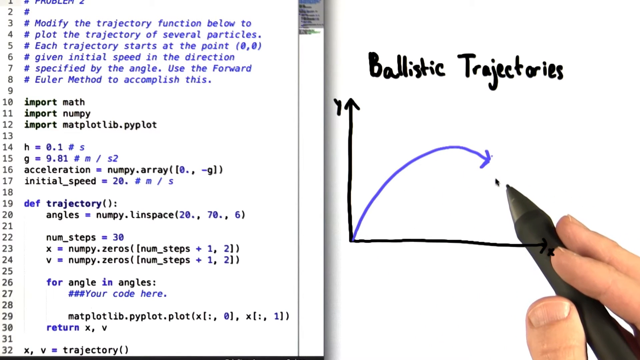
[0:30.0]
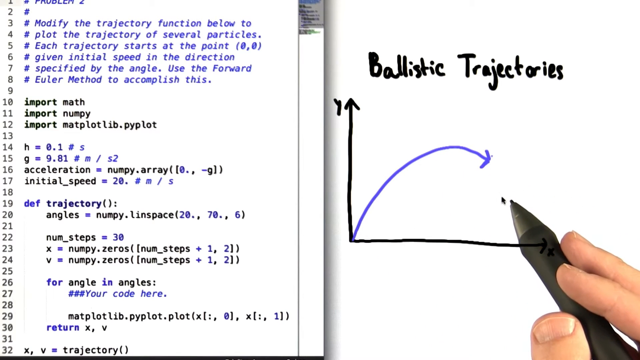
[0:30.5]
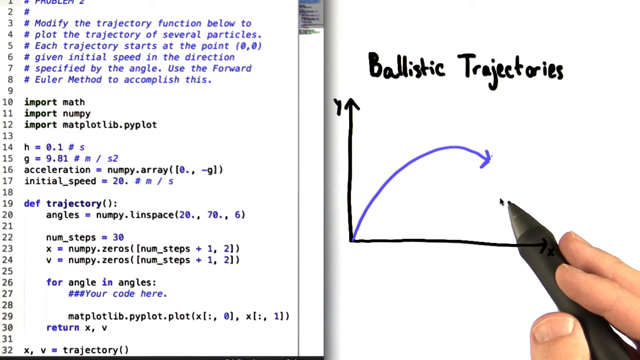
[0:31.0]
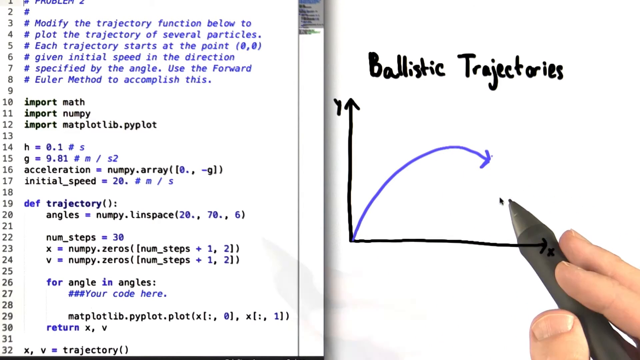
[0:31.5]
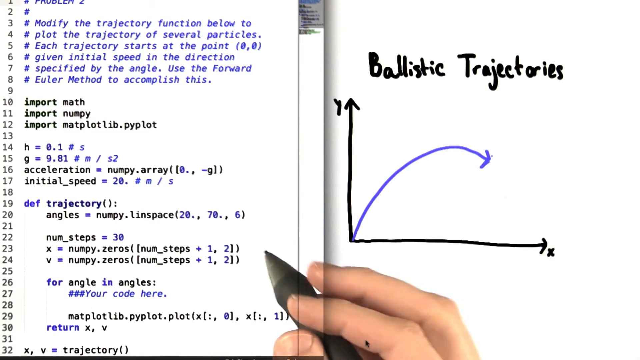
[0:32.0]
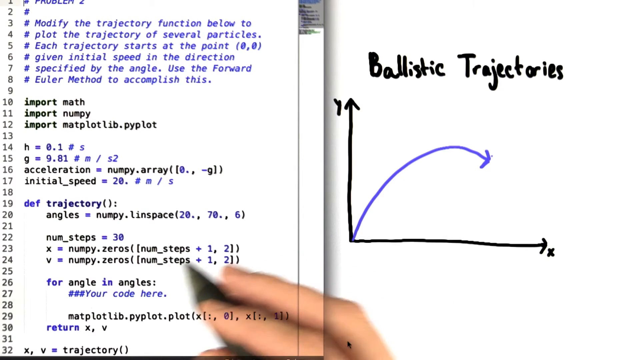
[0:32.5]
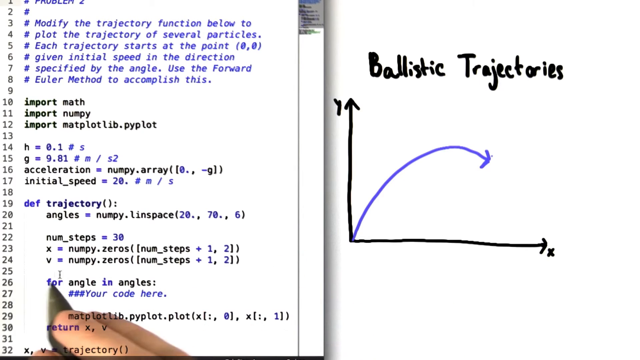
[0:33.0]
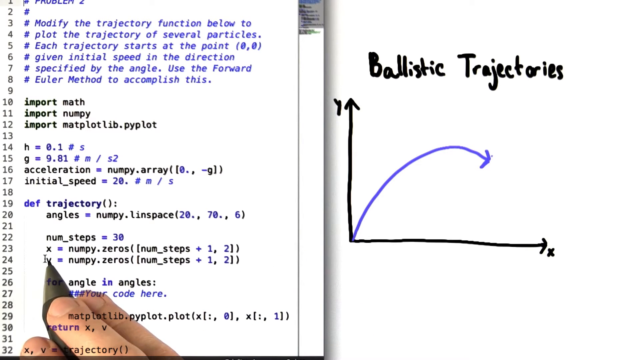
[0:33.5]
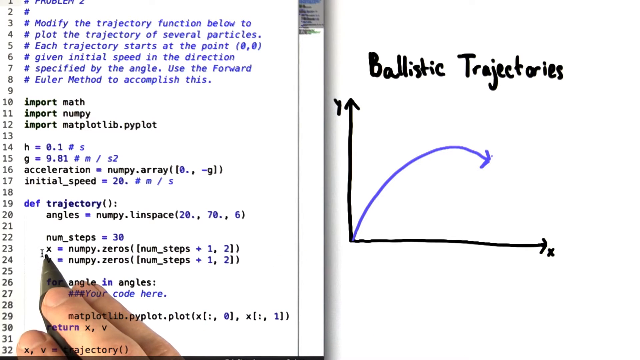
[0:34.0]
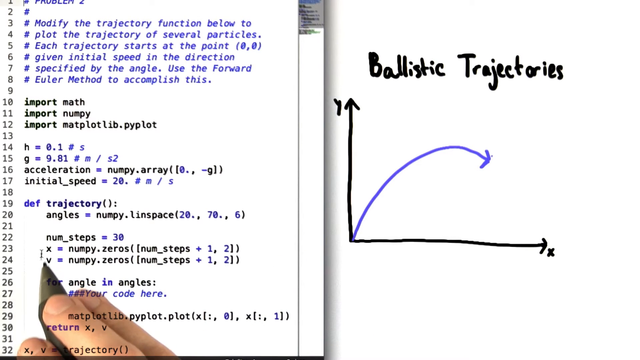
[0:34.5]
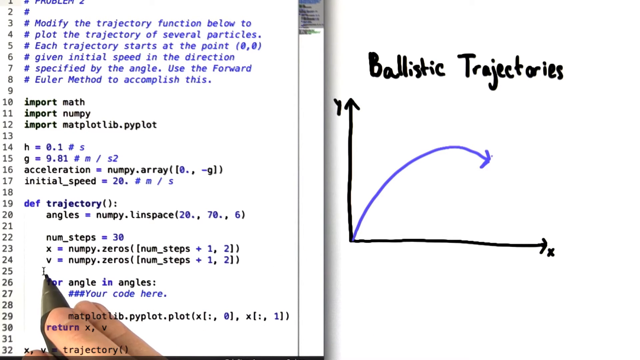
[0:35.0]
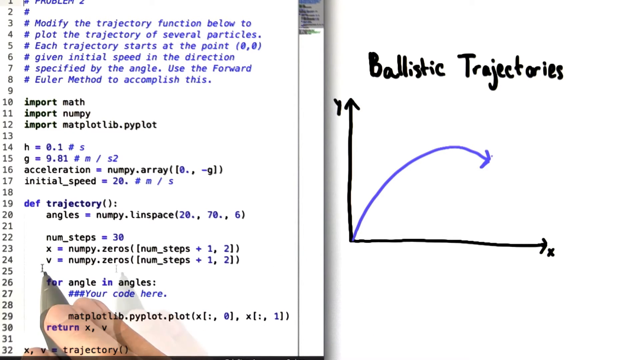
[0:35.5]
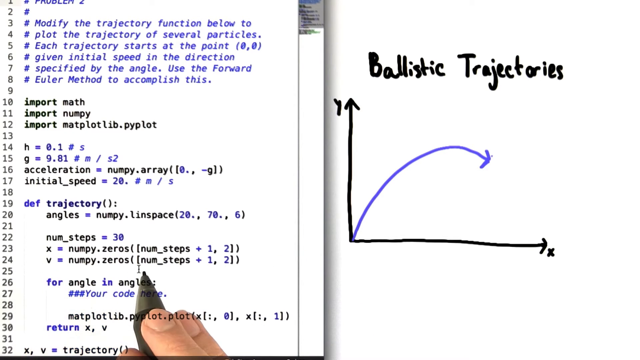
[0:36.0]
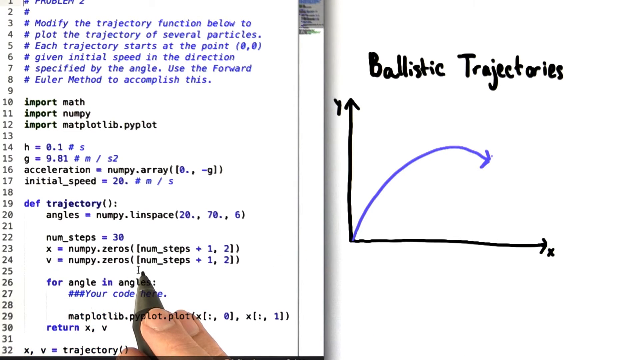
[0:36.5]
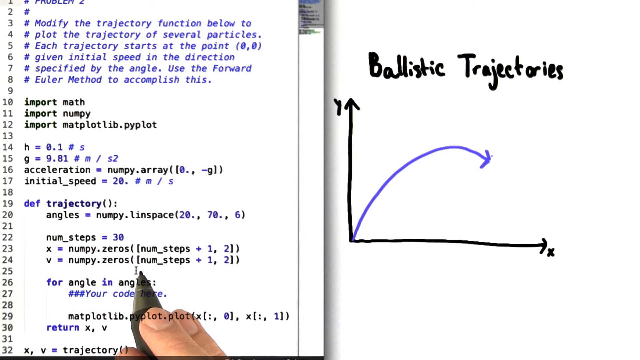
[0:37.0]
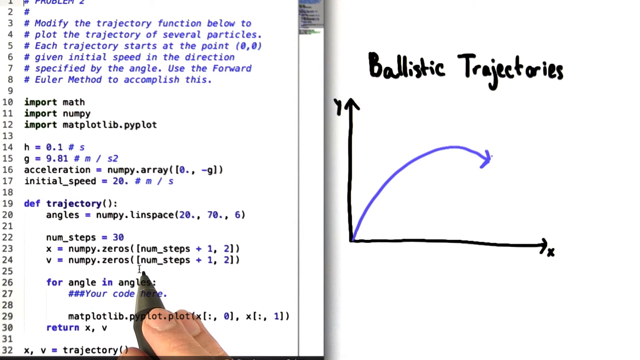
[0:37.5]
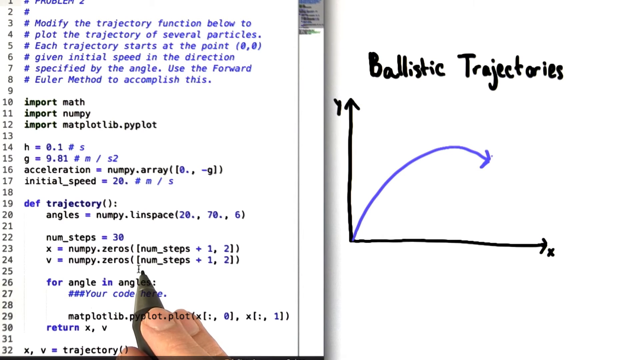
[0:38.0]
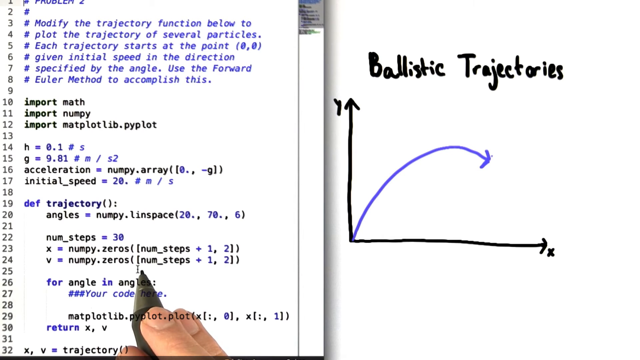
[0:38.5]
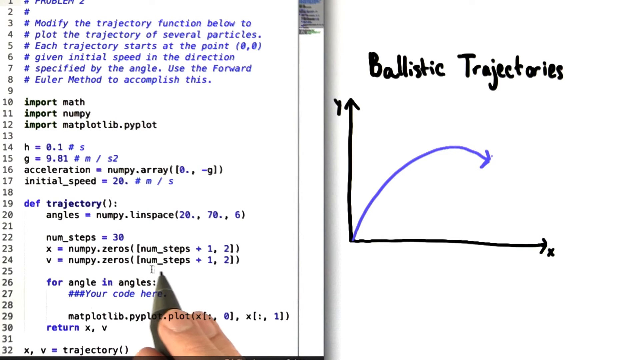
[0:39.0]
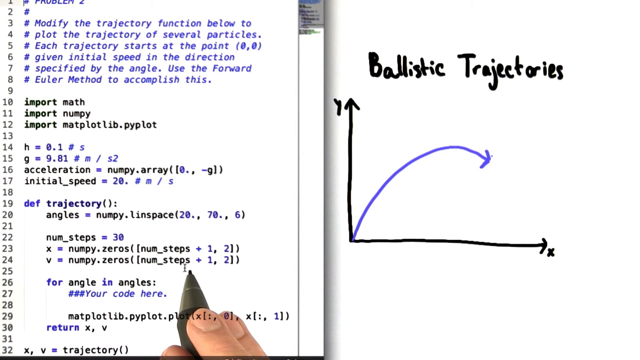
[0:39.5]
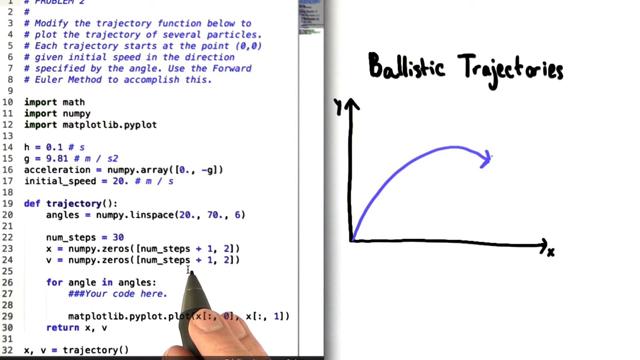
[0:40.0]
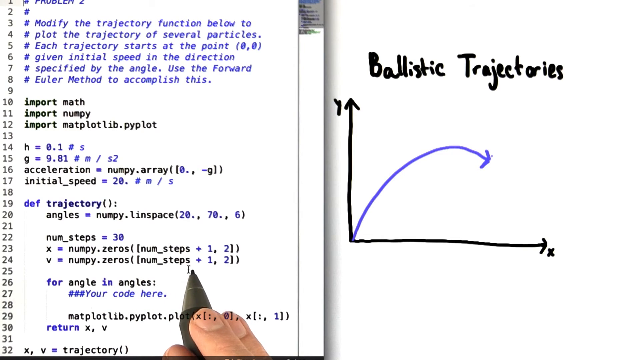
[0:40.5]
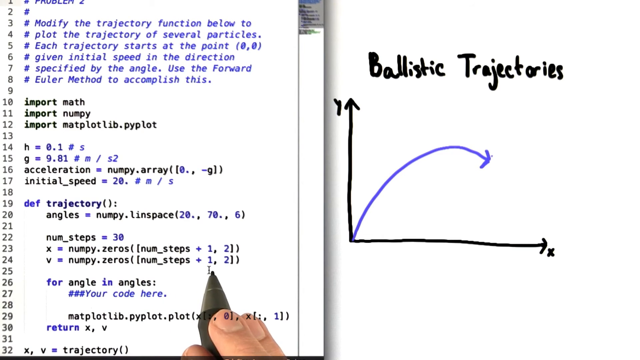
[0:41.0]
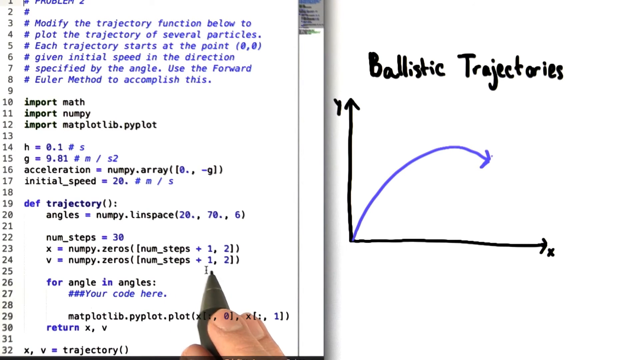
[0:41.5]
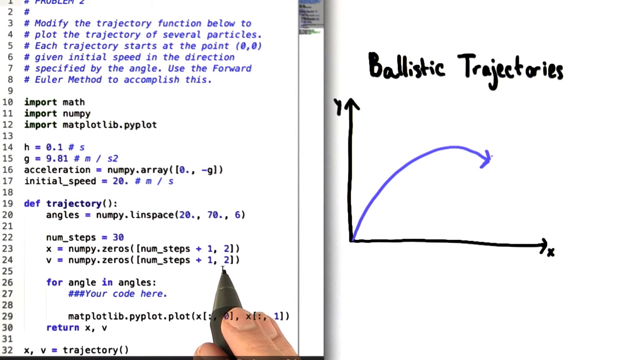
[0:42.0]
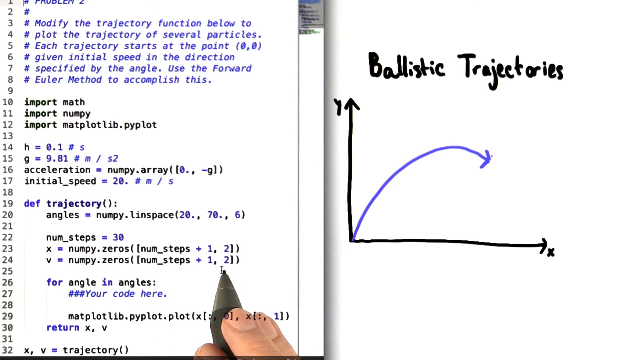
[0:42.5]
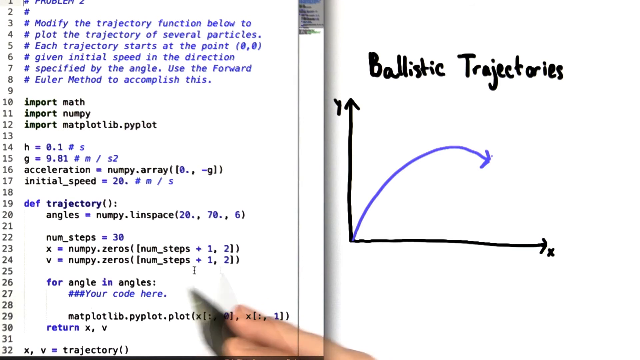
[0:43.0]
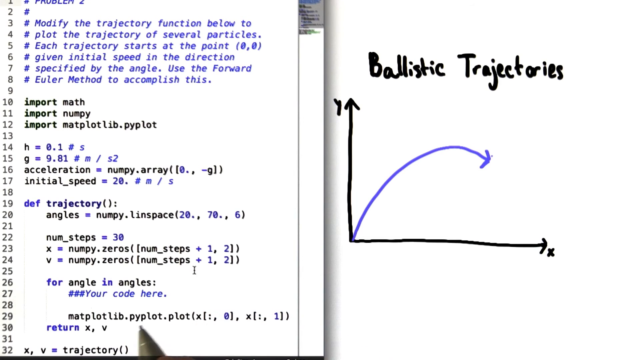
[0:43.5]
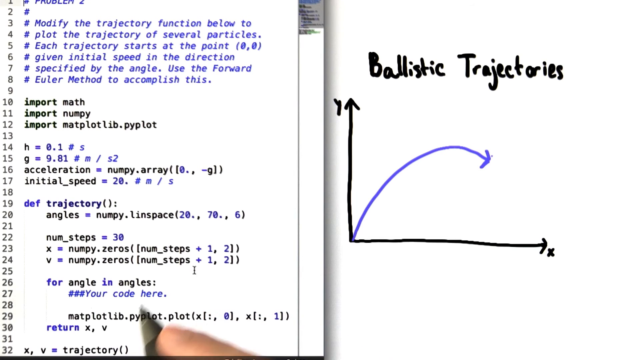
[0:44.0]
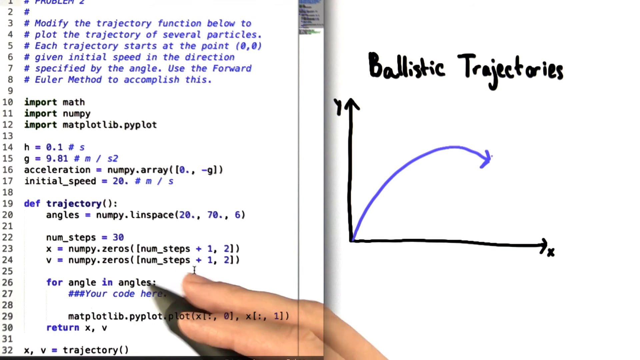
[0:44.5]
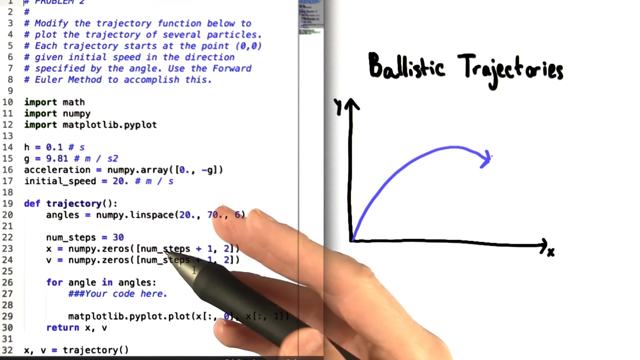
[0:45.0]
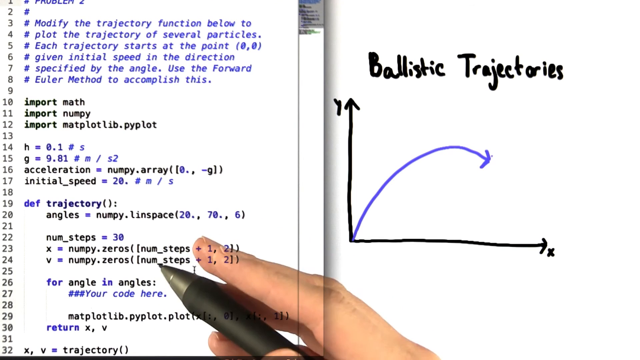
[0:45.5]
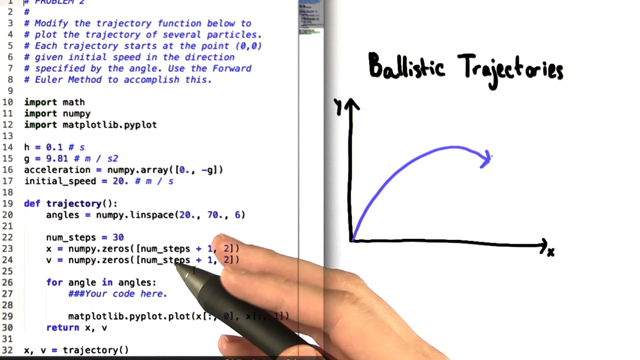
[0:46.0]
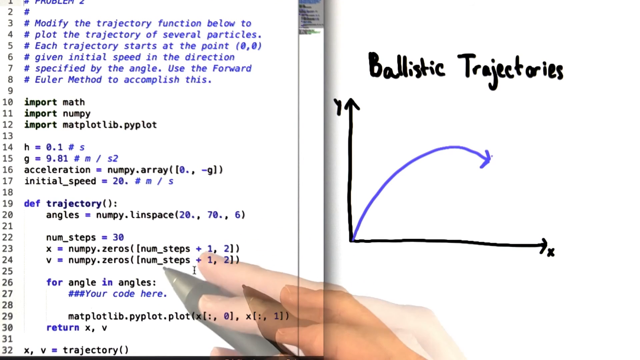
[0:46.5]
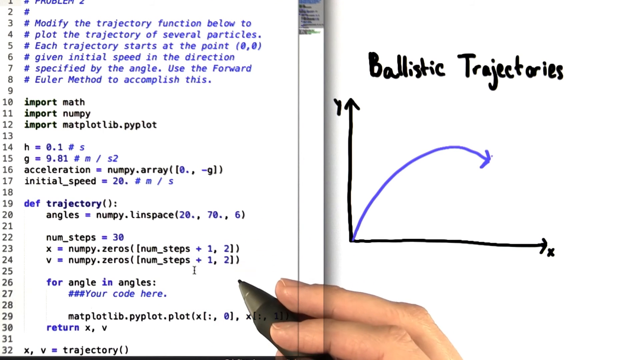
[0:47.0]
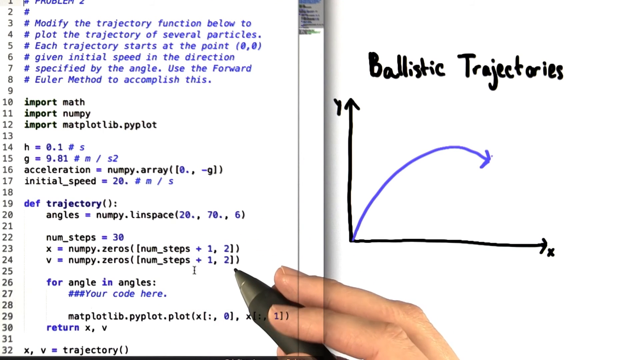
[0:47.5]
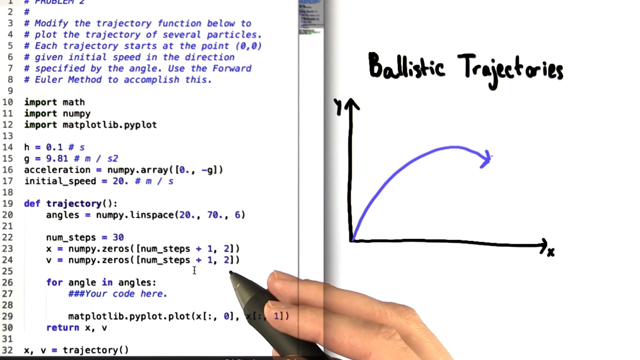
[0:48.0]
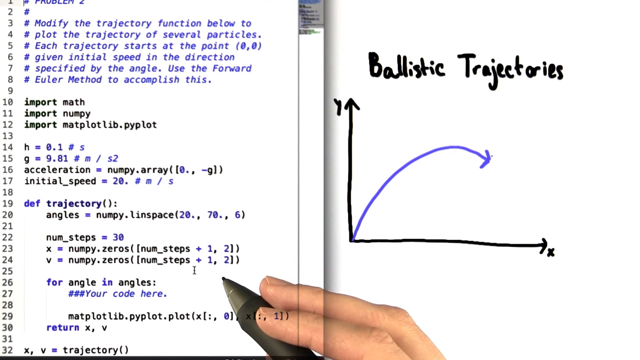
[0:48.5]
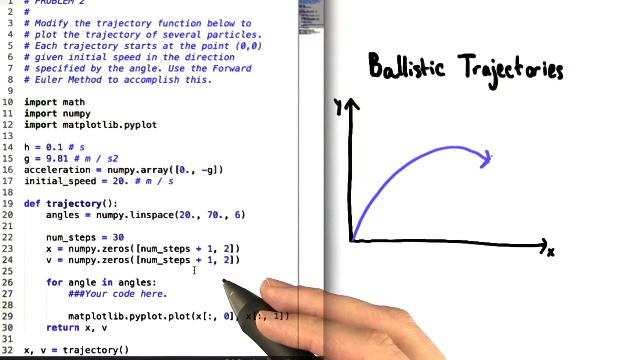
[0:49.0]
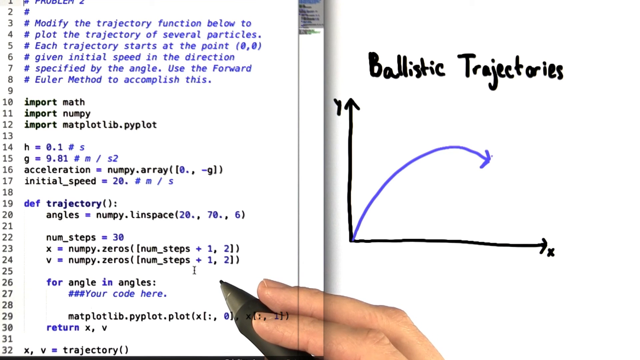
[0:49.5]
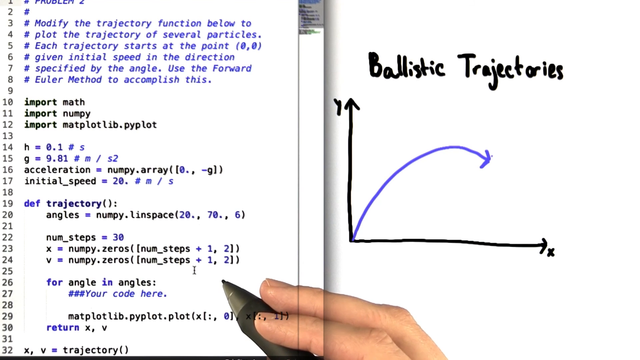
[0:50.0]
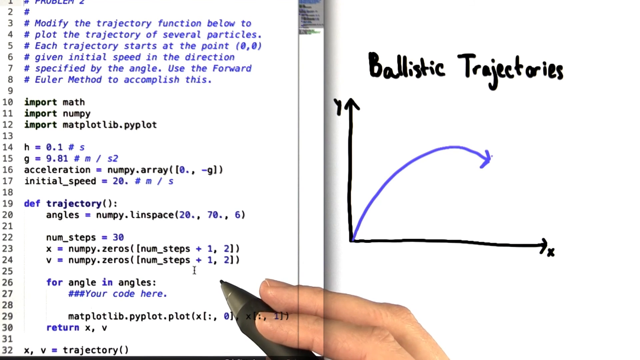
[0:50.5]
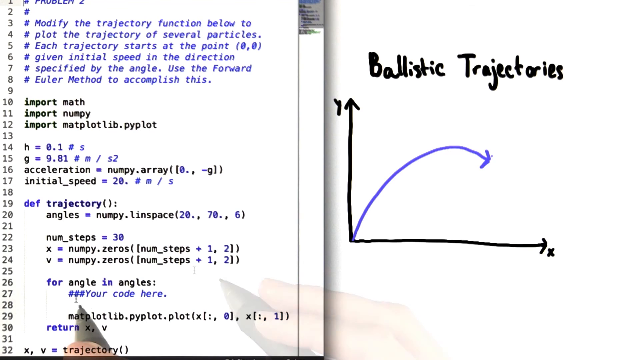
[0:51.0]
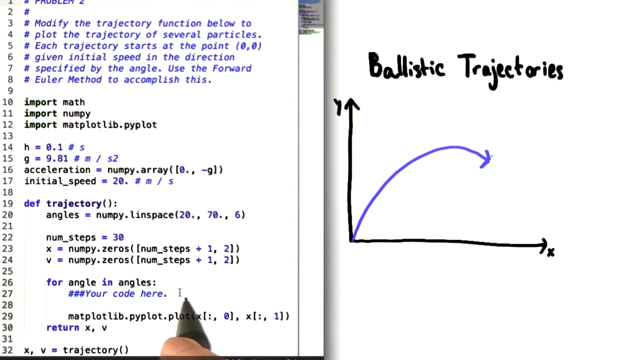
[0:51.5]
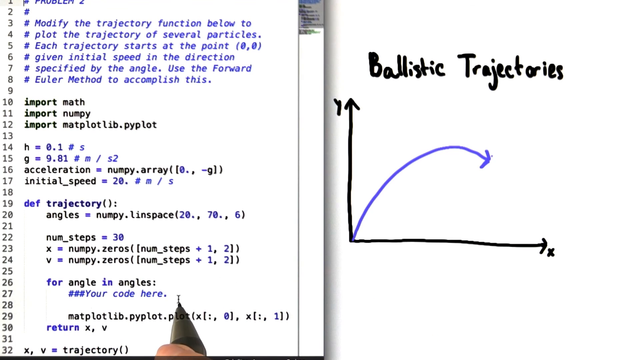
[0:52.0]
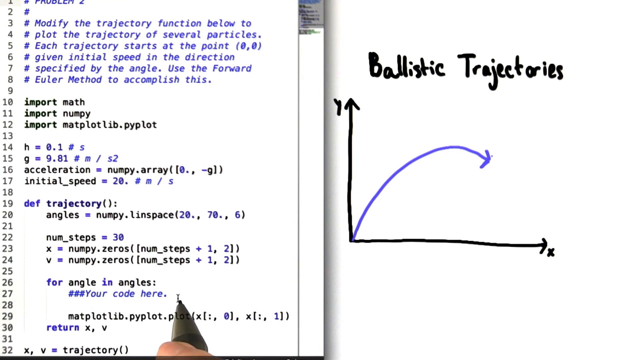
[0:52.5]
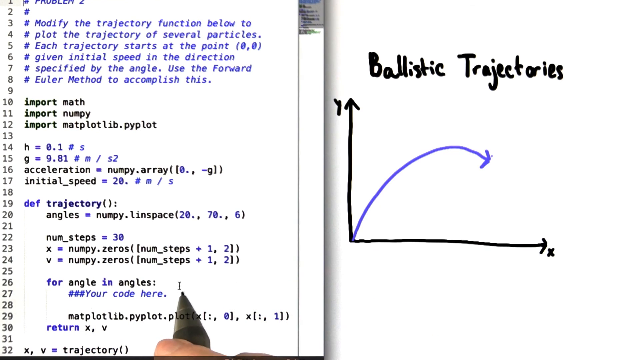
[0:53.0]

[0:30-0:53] A person records their hand gripping a smart pen with the middle finger, index finger and thumb, using it to control the mouse cursor. Superimposed in the foreground is their computer screen. The cursor moves along a curving purple line on a graph labeled "ballistic trajectories"; the graph has a Y and X axis, and the purple line starts where the axes meet, rises toward Y and curves down toward the end of the graph. On the left side of the screen are multiple lines of code. The top reads "modify the trajectory function below to plot the trajectory of several particles. Each trajectory starts at the point, 0, 0, given initial speed in the direction specified by the angle. Use the forward Euler method to establish this." Lines of code follow. The person points toward the end of the graph, then moves the pen to point to several lines of code, starting with the X and its values, then the V with its values. They point to a line that reads "for angle in angles", and there is a line that reads "number, number, number, your code here".